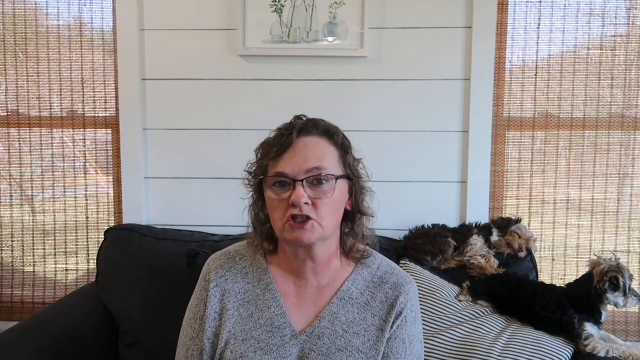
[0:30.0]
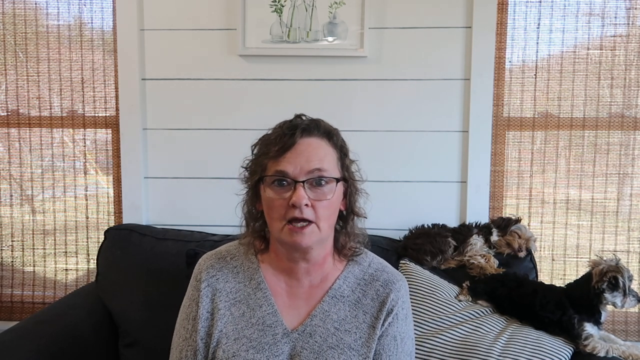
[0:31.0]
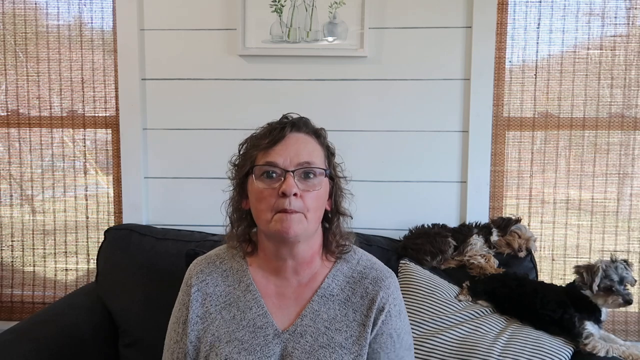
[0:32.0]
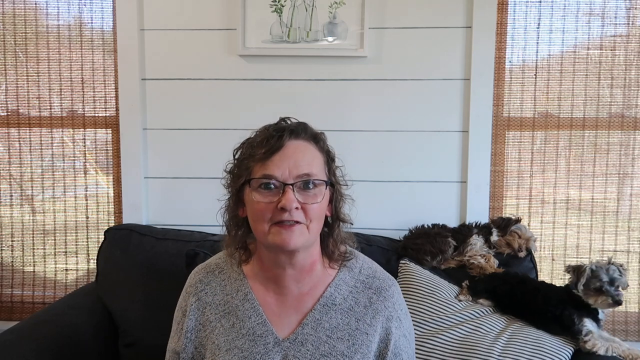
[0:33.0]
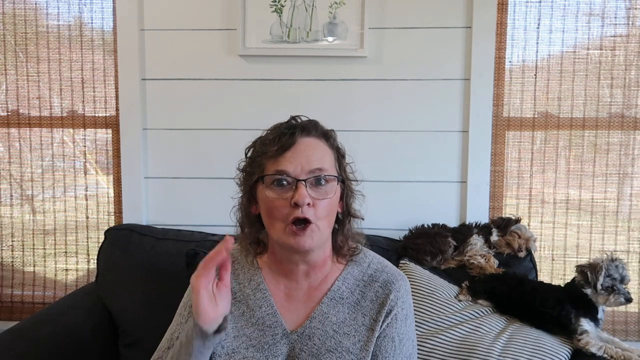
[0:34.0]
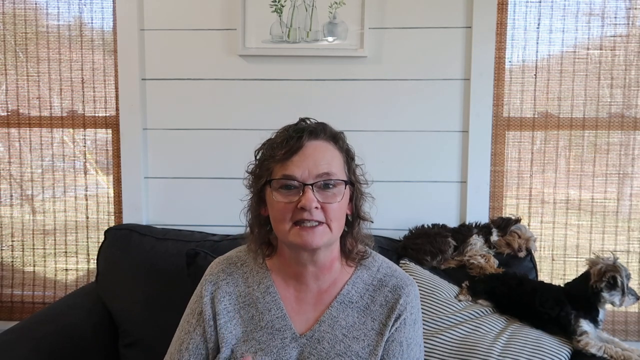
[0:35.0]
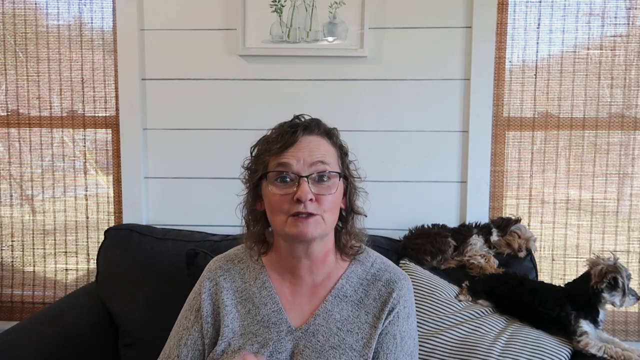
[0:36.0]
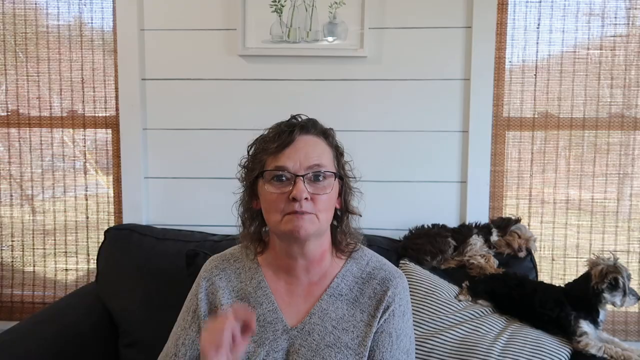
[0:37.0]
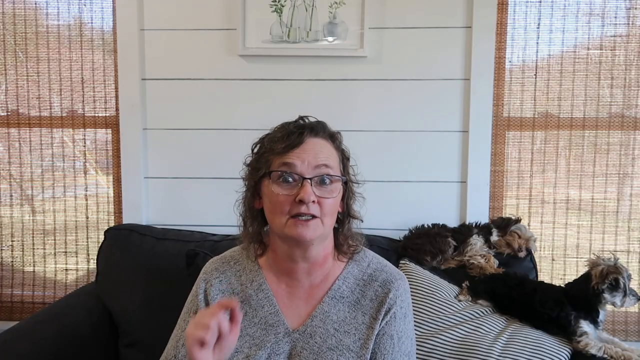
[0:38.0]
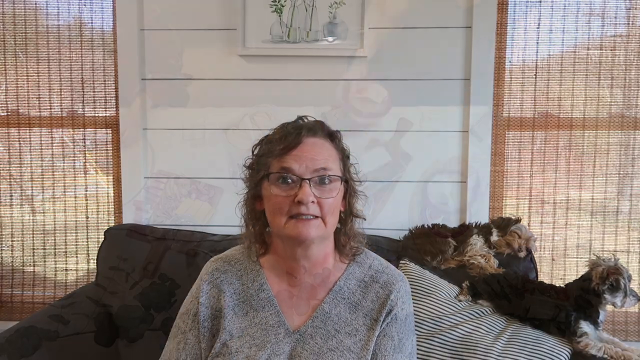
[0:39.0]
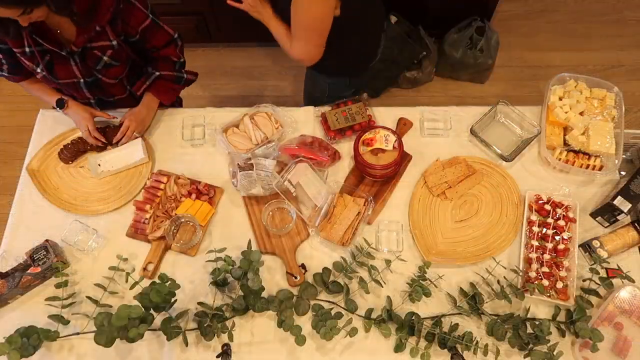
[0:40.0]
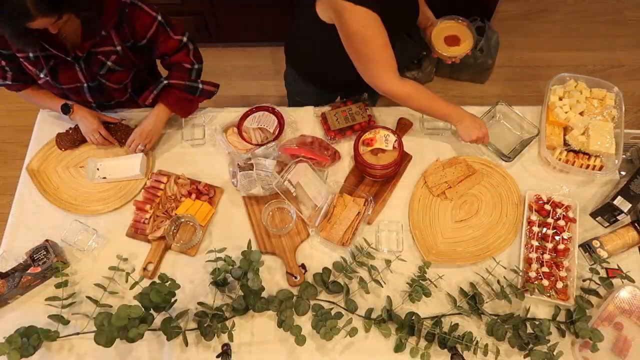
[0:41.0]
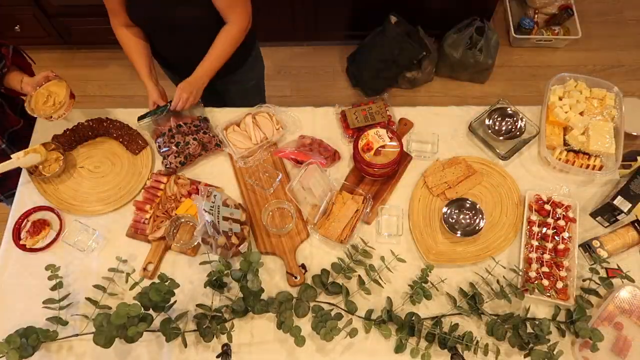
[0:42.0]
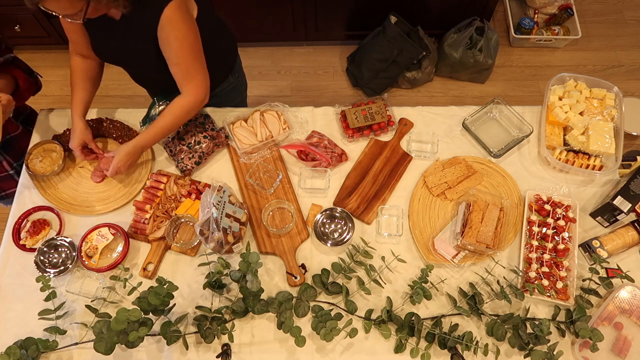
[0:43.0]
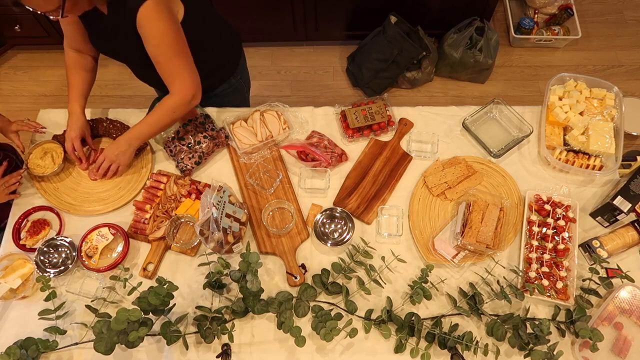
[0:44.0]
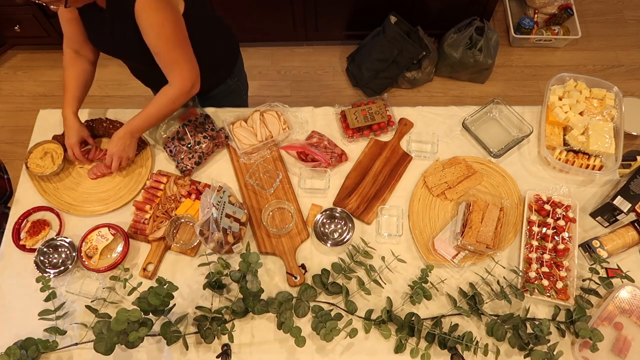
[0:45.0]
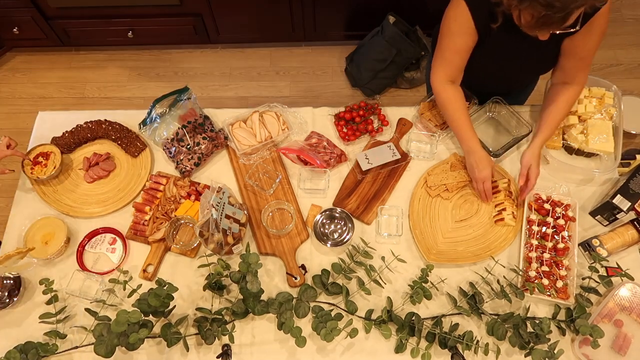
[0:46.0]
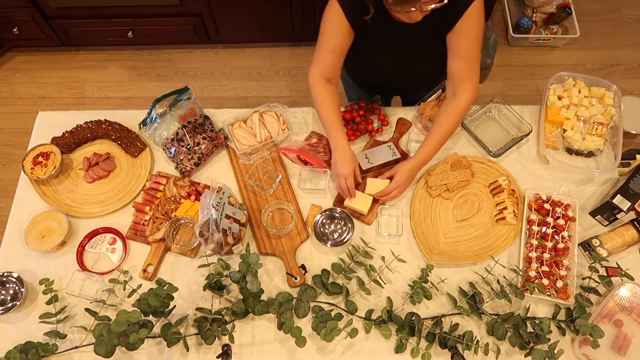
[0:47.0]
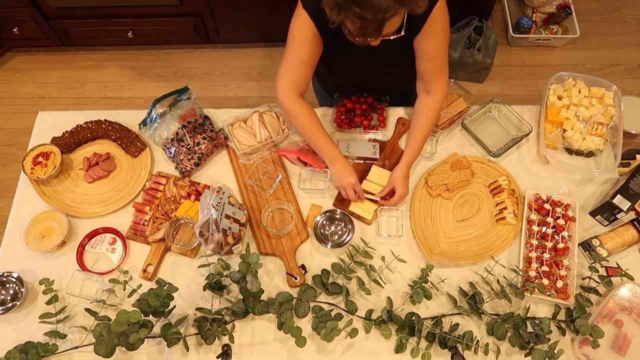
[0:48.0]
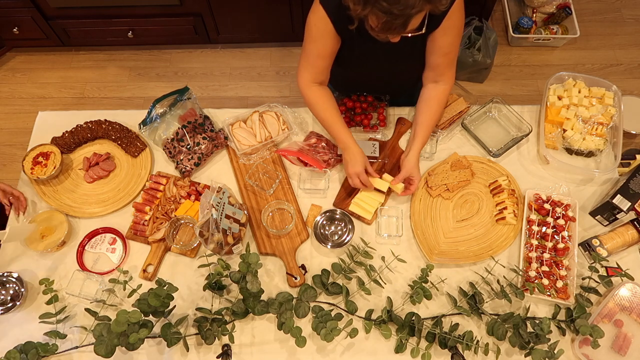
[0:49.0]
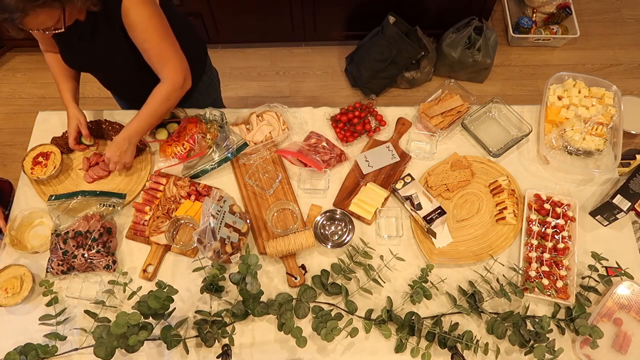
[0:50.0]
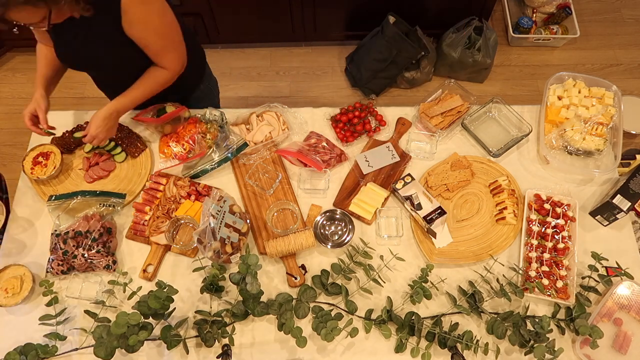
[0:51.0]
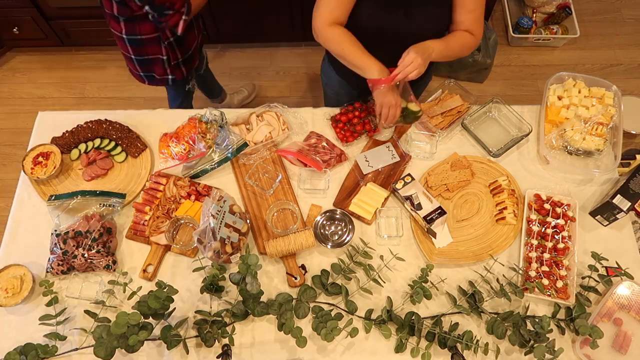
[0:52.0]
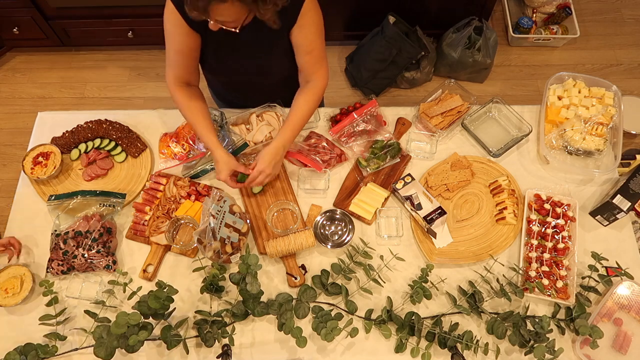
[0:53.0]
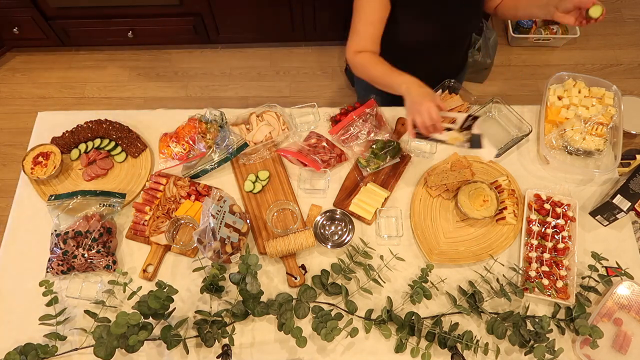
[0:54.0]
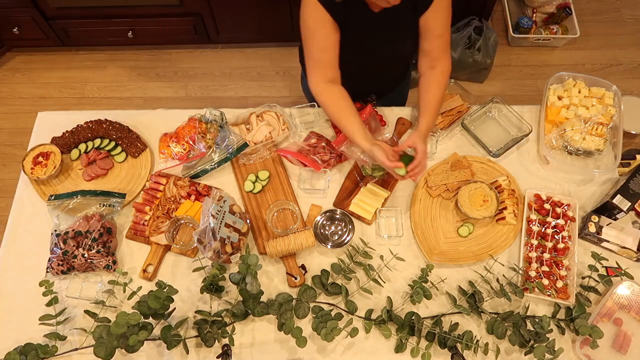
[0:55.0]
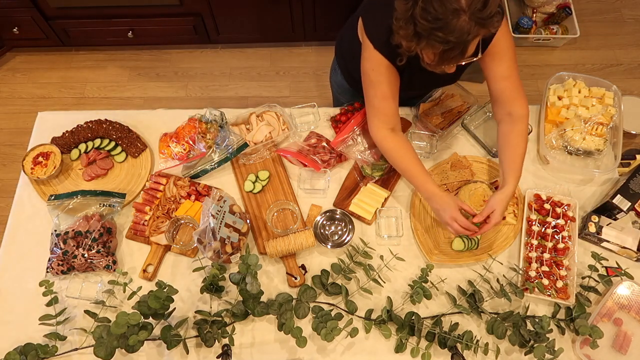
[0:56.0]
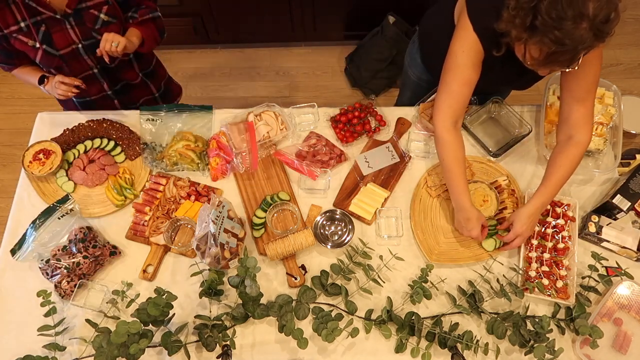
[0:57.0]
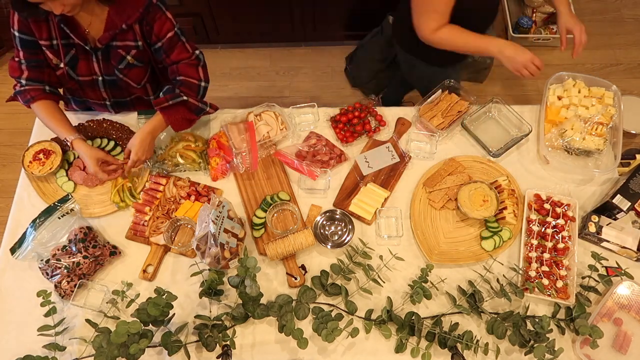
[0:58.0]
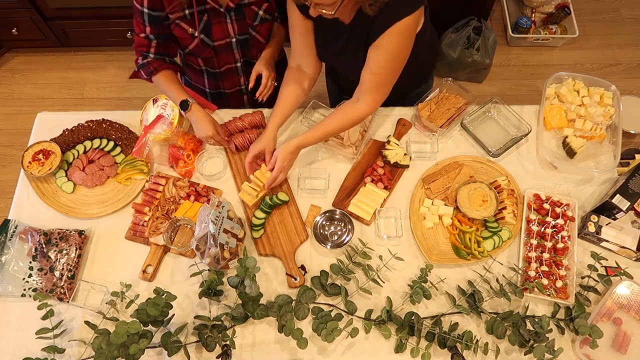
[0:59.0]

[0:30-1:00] The woman remains seated on the couch with the two puppies, both Boston Terriers: one is black, and the other is black and light brown. The woman slightly moves her head, closes her eyes, and gesticulates and points as she makes a point. The video then transitions to an aerial view of two people in a kitchen with various charcuterie boards and various types of food on the table, along with a leaf and small sauces. The footage is fast and dynamic as both people move quickly. A woman in a sleeveless black dress grabs things from her bag and places them on the board, well arranged. She has added cheese to a dark brown charcuterie board, and slices of cucumber are neatly arranged on the board. The other woman wears a plaid red shirt.